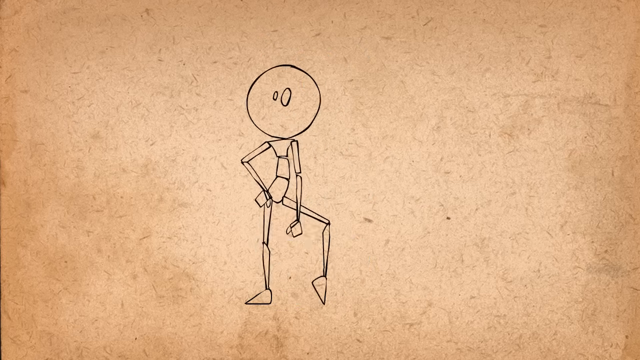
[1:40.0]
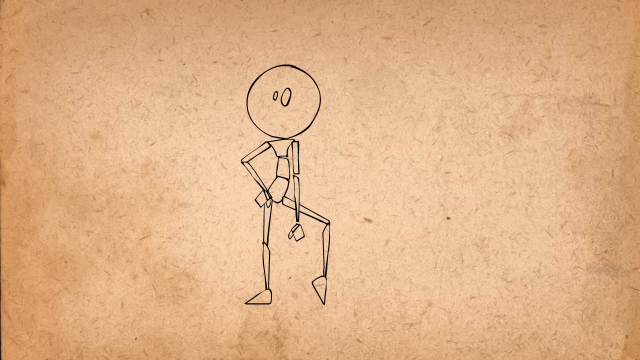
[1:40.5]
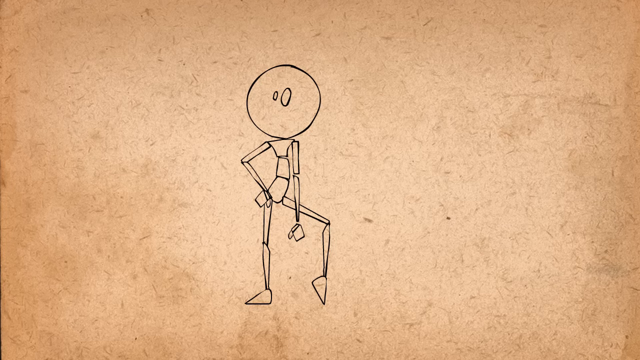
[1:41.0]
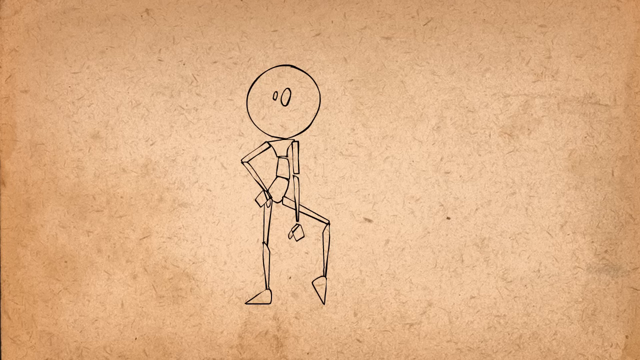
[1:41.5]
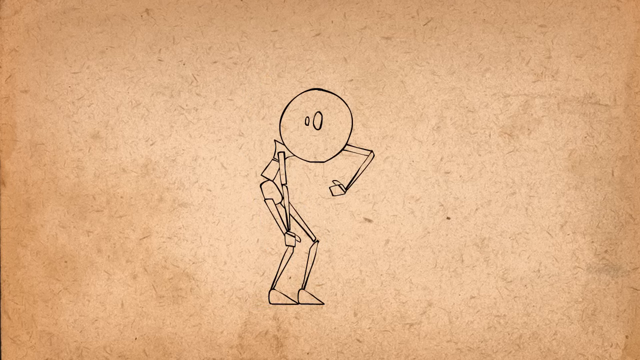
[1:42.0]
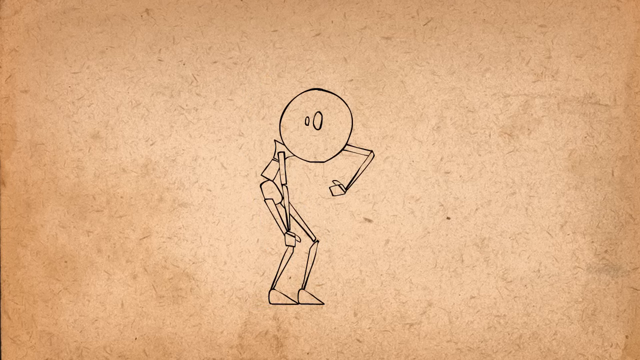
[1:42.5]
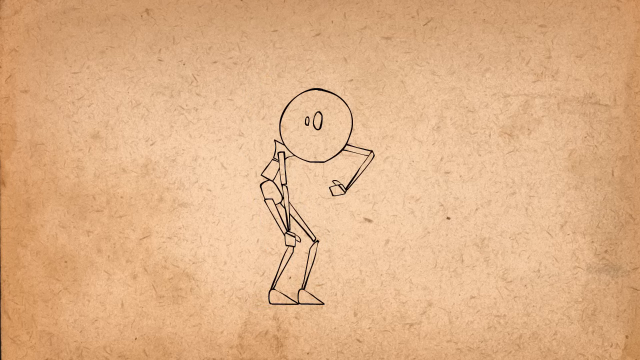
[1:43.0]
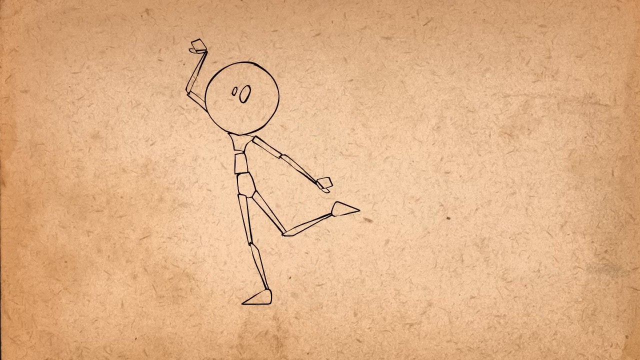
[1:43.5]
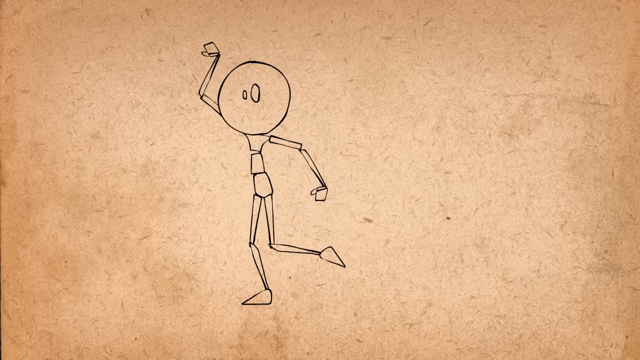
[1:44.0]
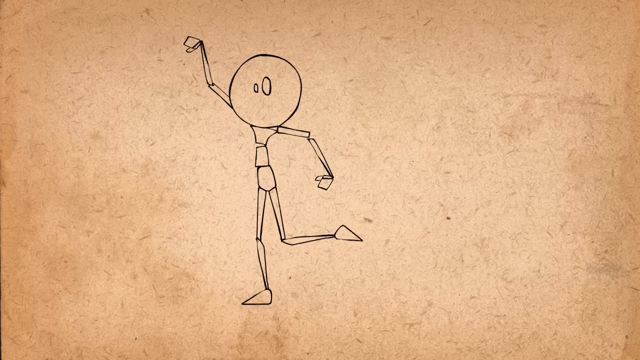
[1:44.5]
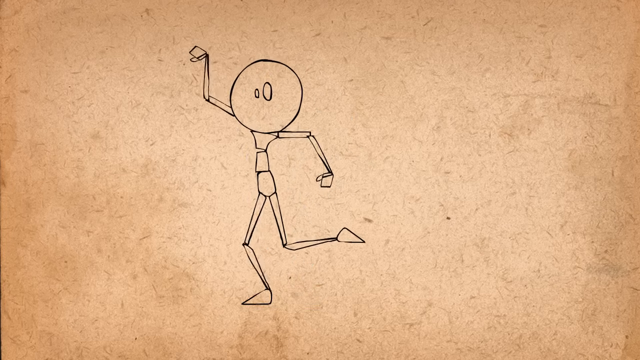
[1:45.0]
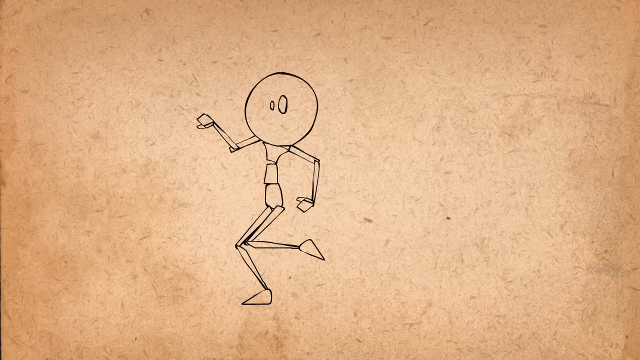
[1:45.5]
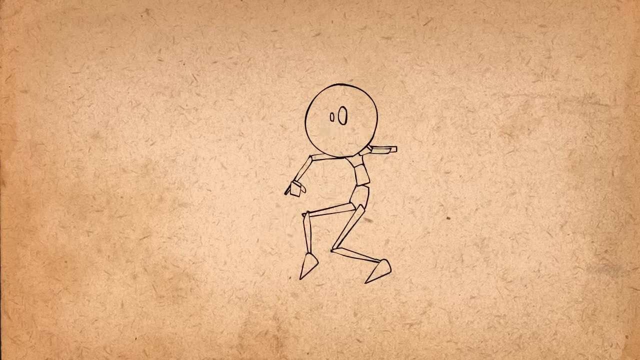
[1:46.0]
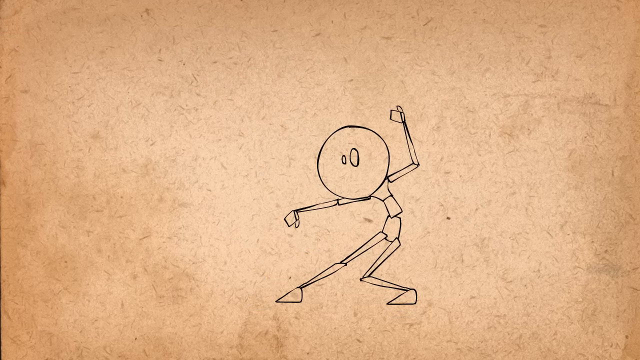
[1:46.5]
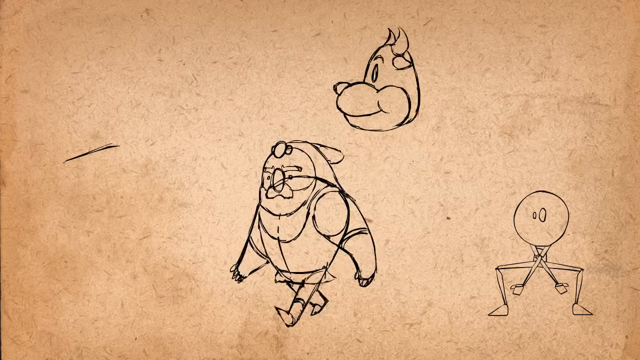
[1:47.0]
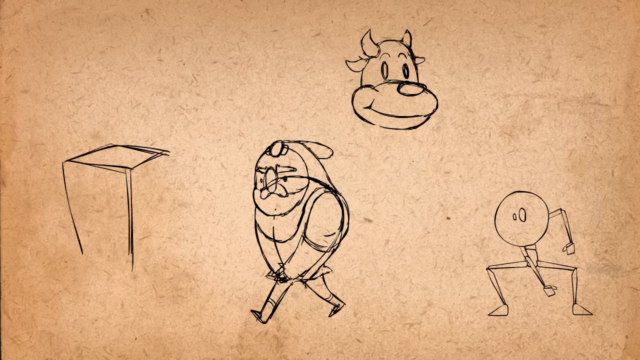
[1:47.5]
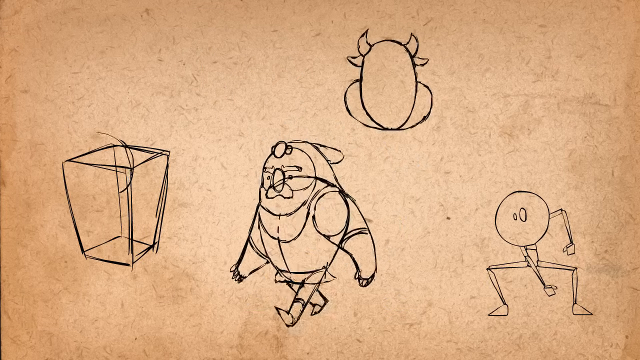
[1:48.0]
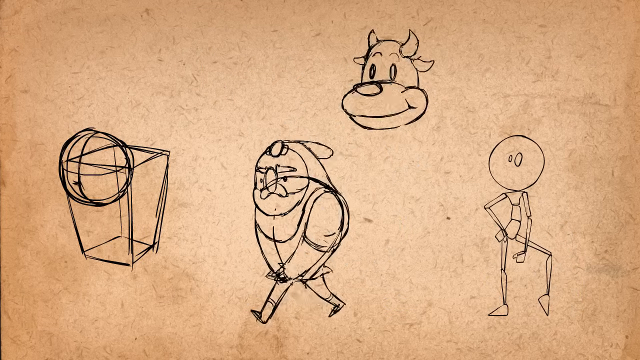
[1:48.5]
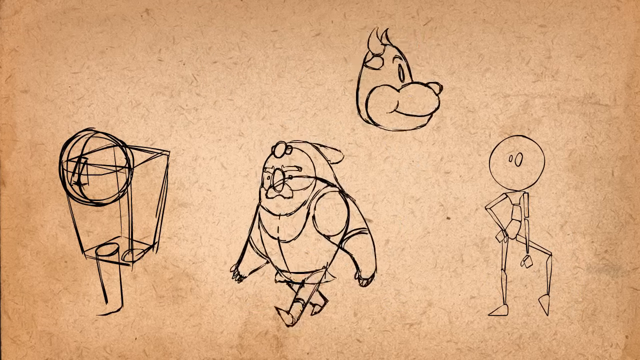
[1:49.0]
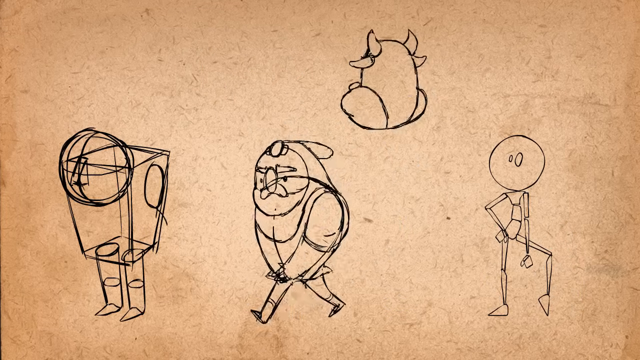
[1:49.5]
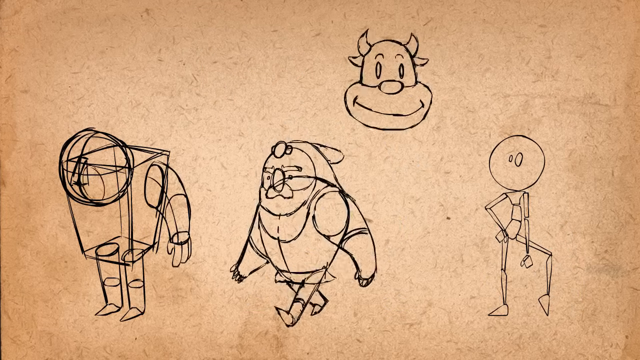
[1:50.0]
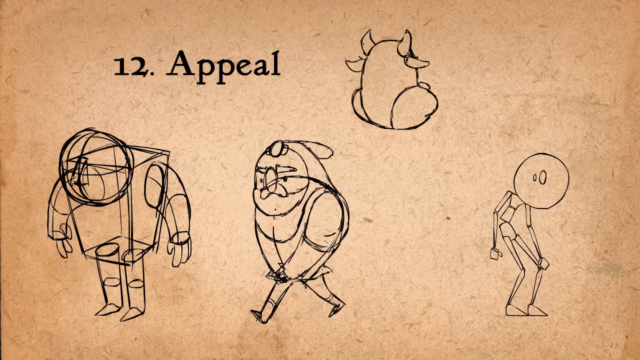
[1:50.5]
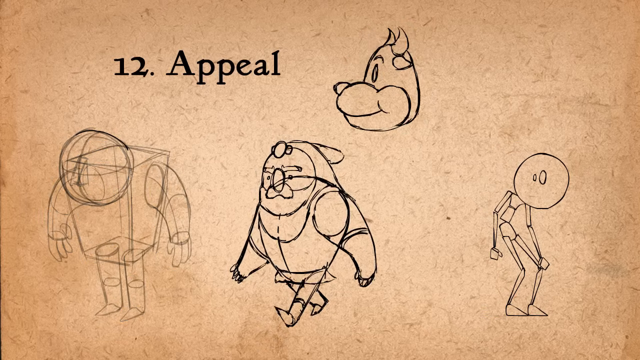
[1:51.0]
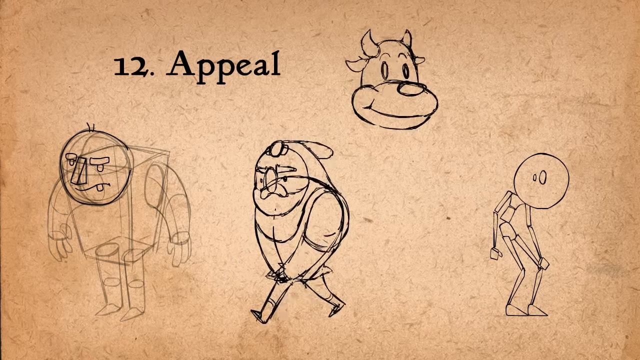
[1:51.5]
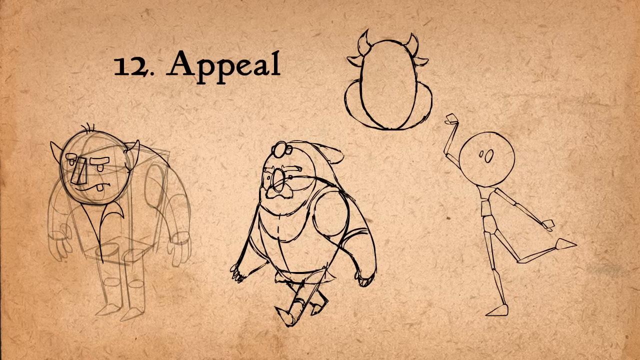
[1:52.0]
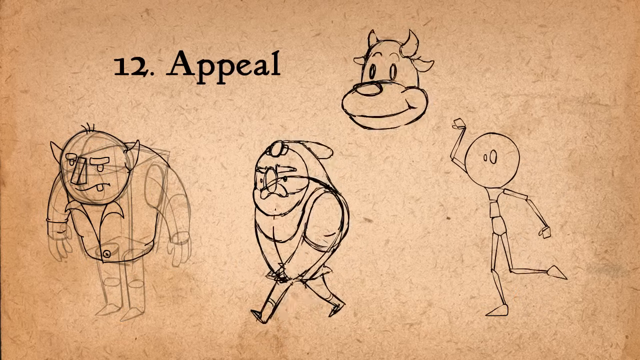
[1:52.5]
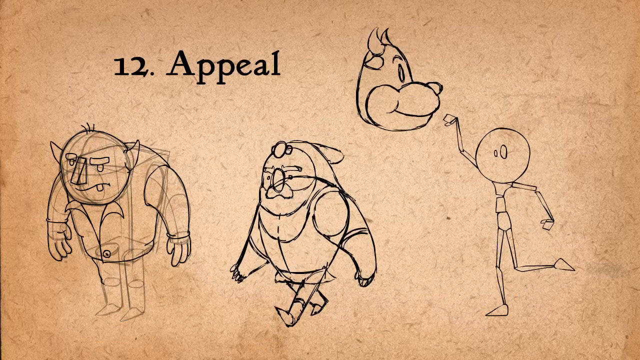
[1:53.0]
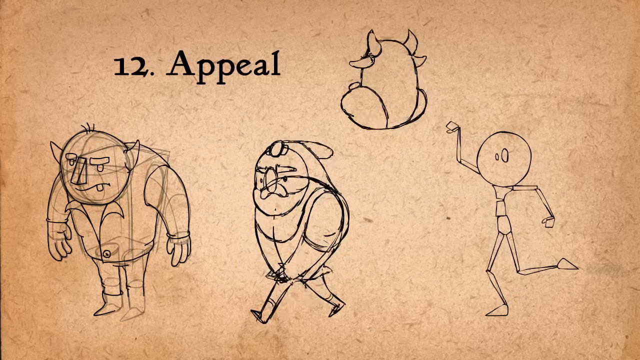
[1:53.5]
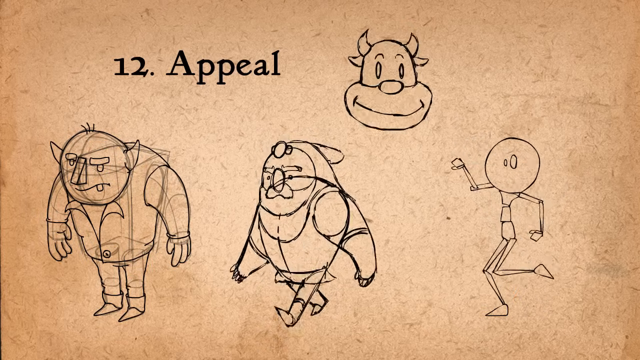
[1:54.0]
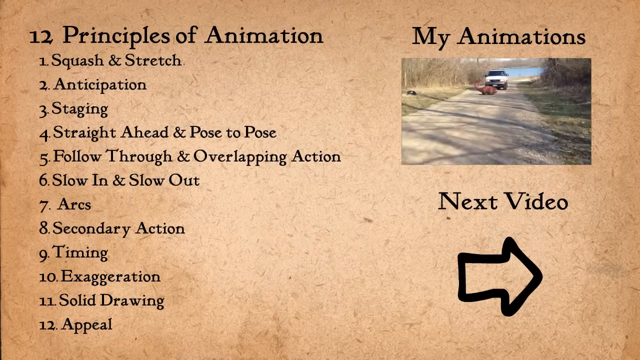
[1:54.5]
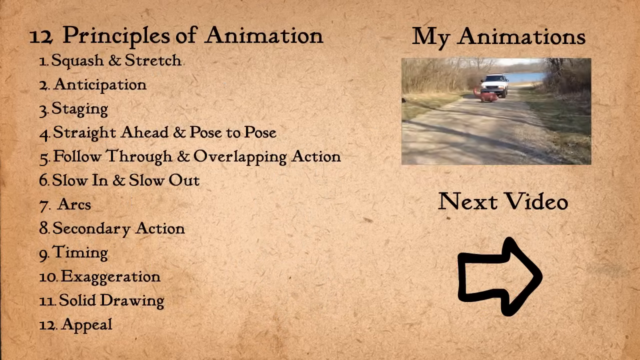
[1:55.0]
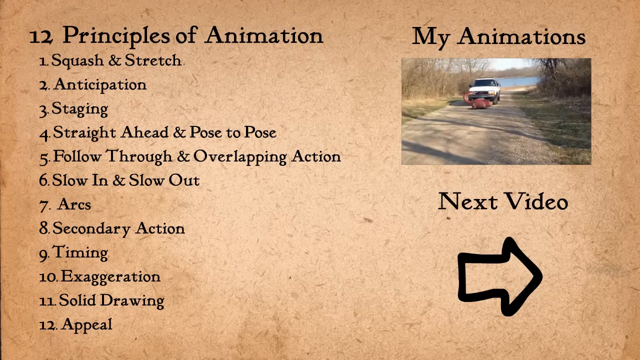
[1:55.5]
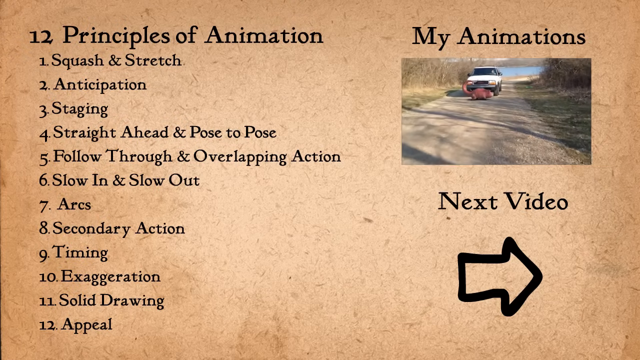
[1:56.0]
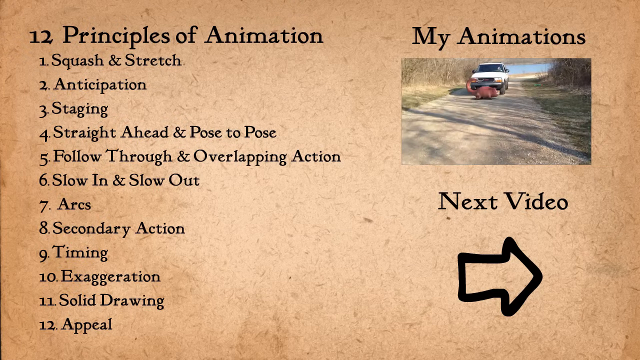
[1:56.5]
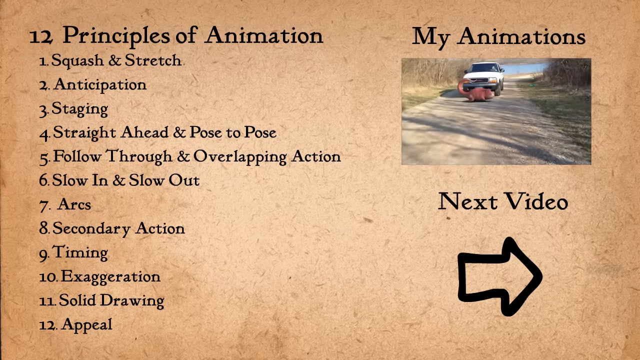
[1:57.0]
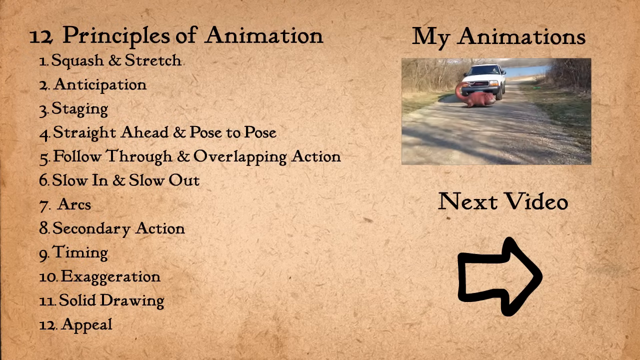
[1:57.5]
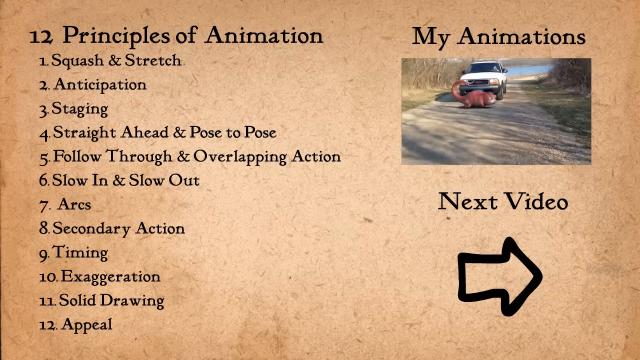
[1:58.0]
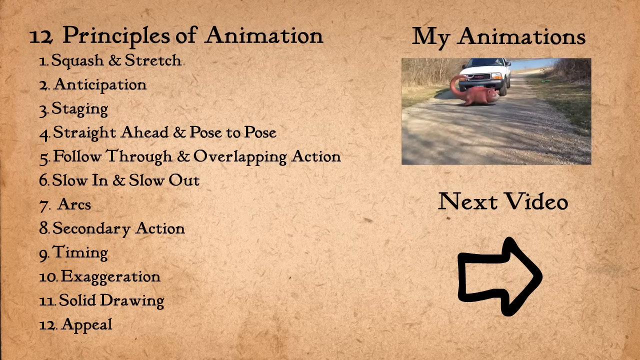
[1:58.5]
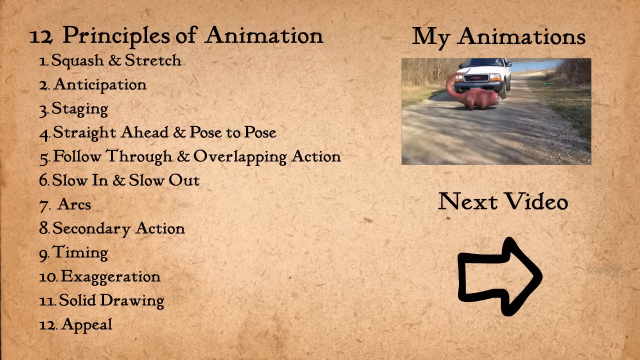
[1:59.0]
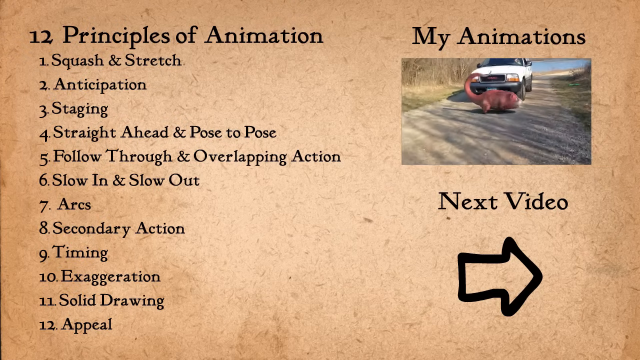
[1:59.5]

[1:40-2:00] In the solid drawing section, a very skinny creature with few features is shown in its different shapes: one smaller eye, a big nose, sections for the shoulders, upper arm, lower arm and hand, three sections for the torso, the lower and upper leg, and the ankle. It demonstrates different movements and how the joints are affected when those movements are drawn in animation.